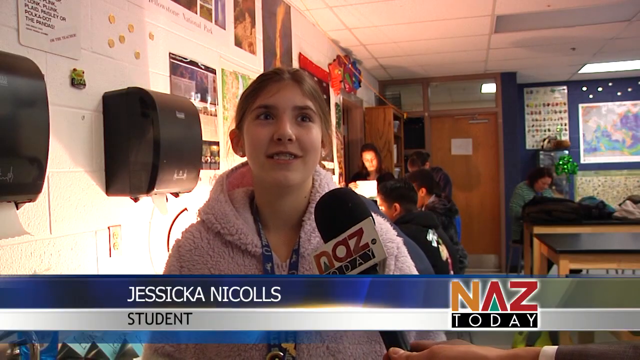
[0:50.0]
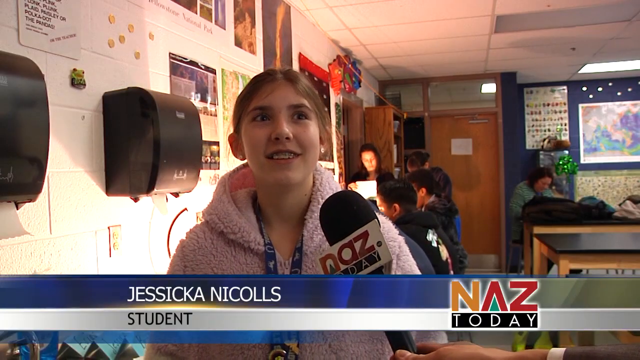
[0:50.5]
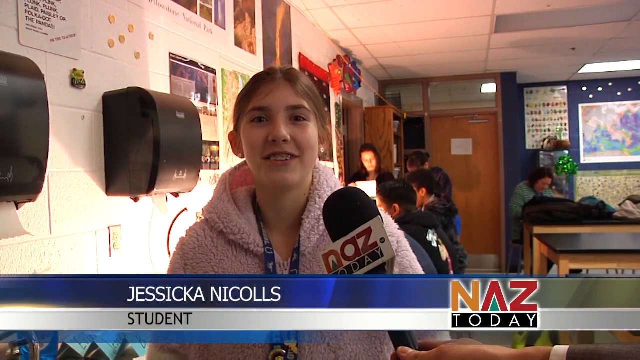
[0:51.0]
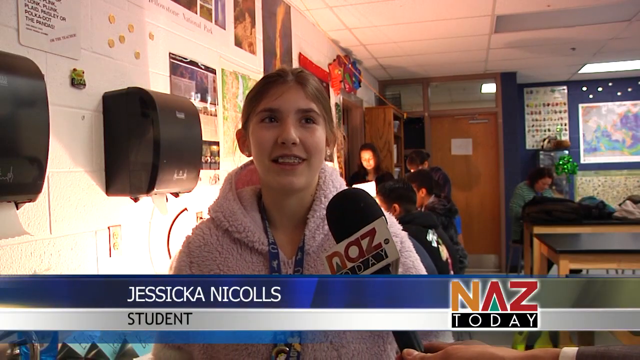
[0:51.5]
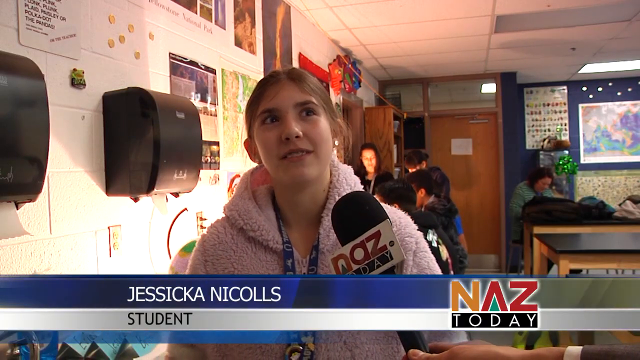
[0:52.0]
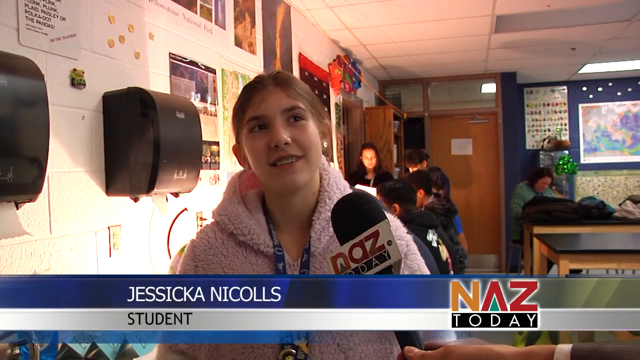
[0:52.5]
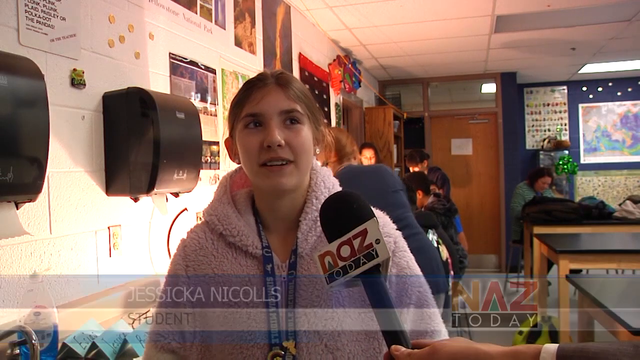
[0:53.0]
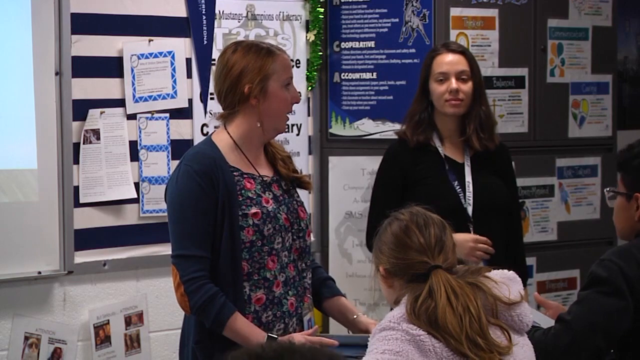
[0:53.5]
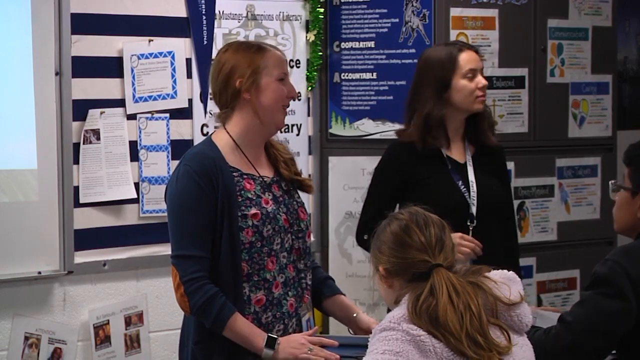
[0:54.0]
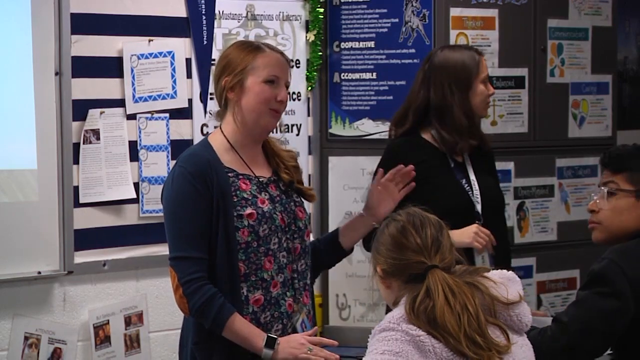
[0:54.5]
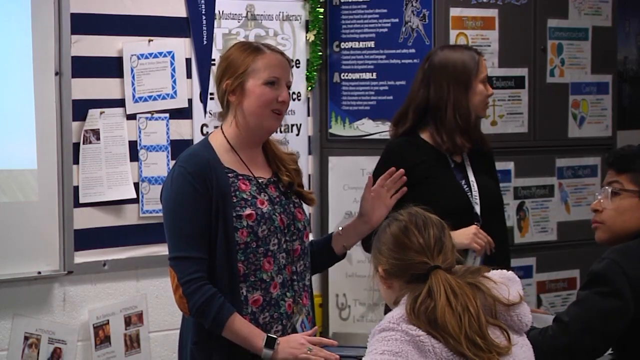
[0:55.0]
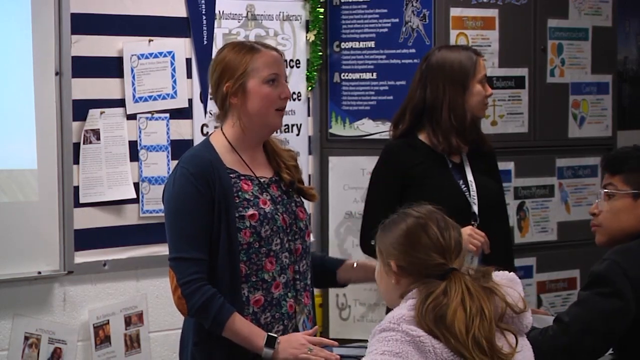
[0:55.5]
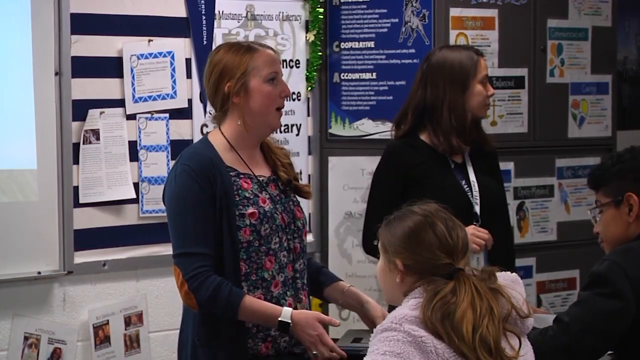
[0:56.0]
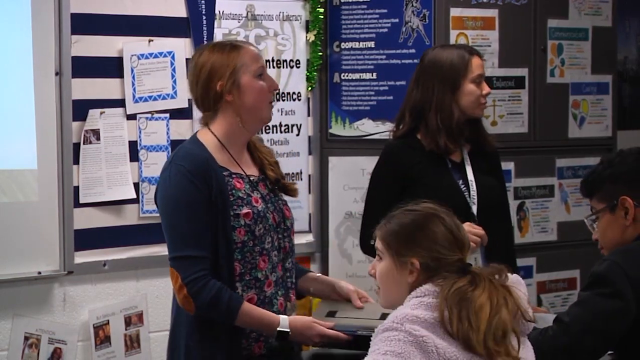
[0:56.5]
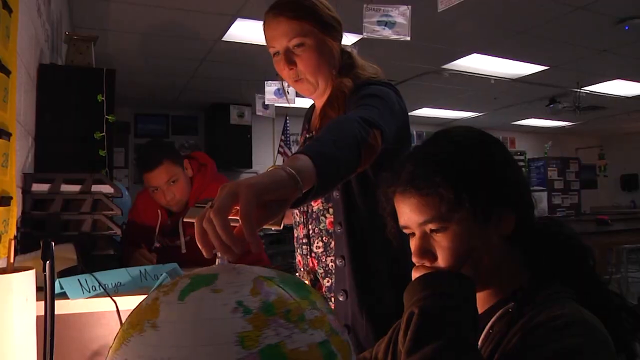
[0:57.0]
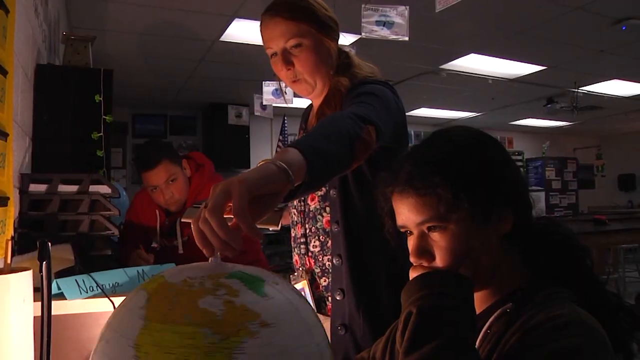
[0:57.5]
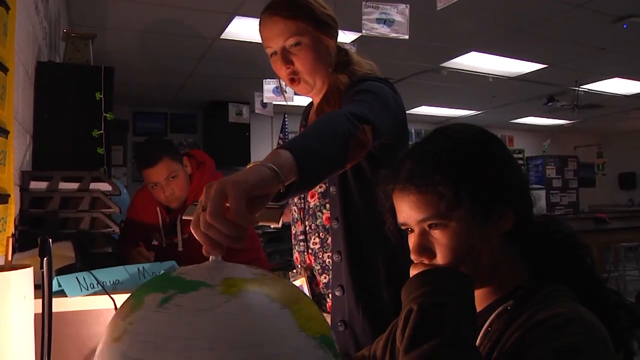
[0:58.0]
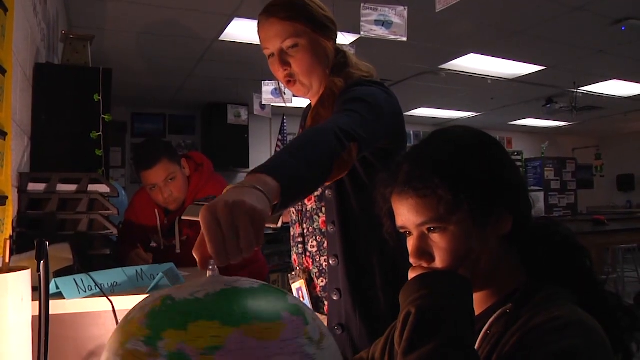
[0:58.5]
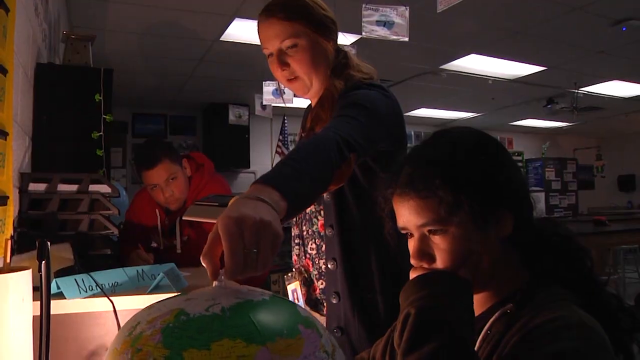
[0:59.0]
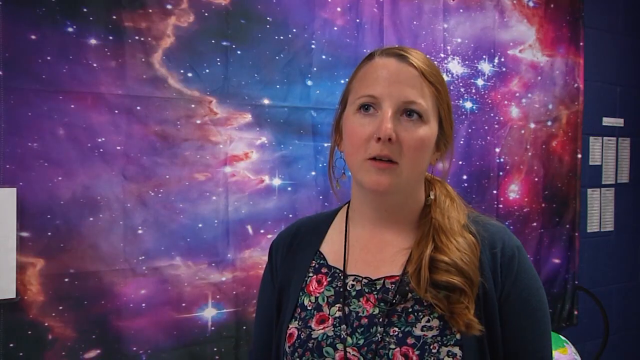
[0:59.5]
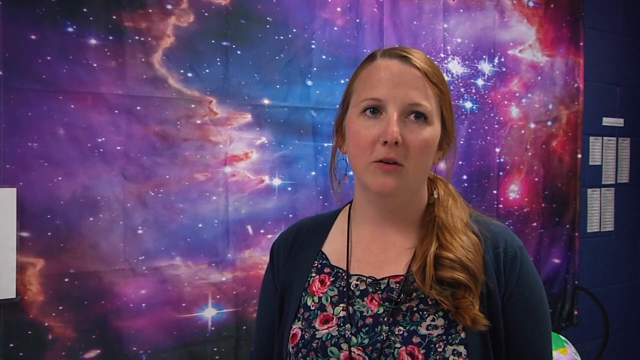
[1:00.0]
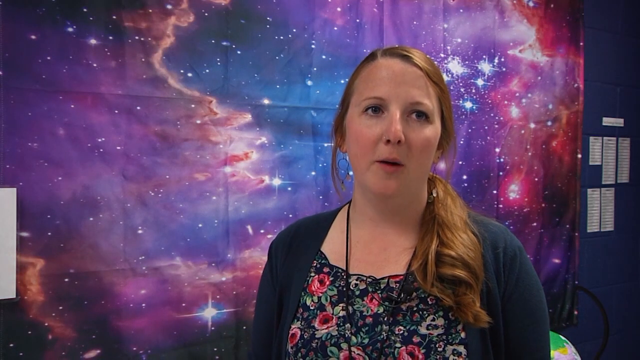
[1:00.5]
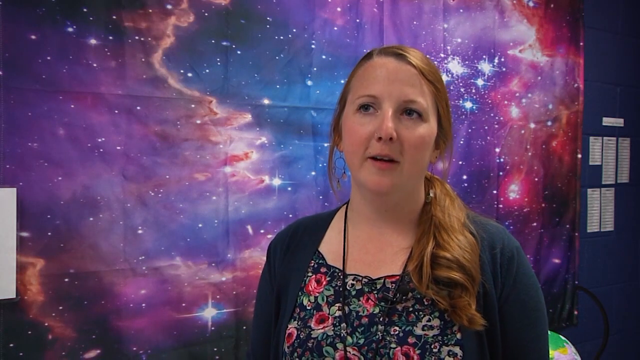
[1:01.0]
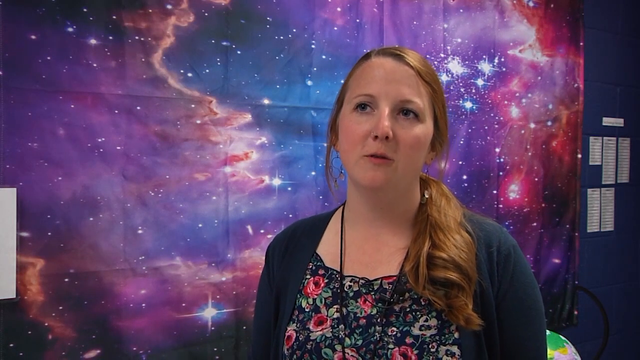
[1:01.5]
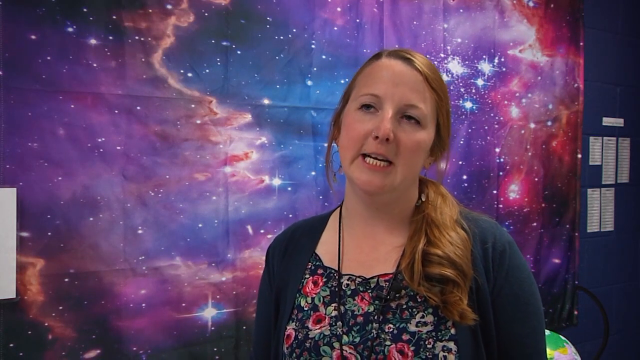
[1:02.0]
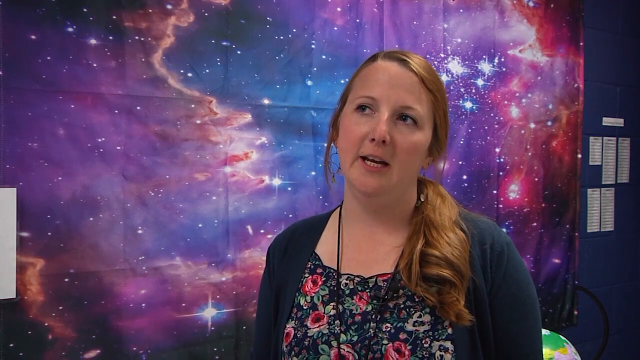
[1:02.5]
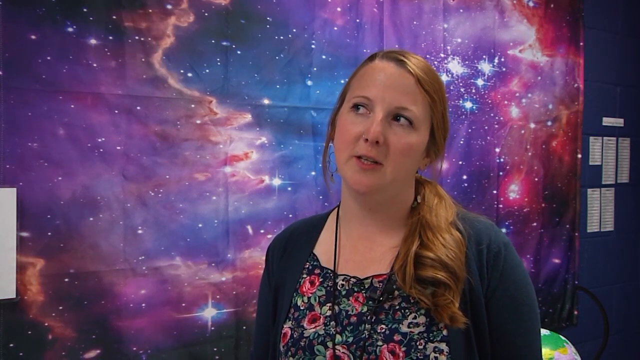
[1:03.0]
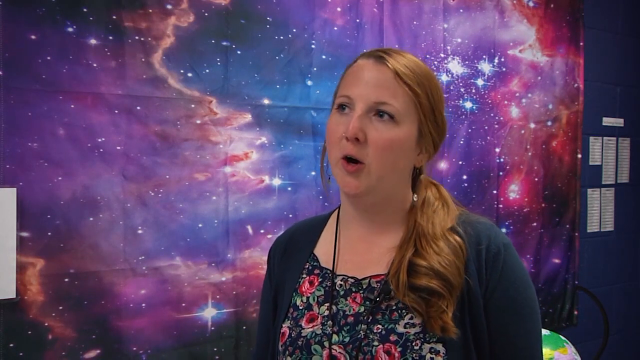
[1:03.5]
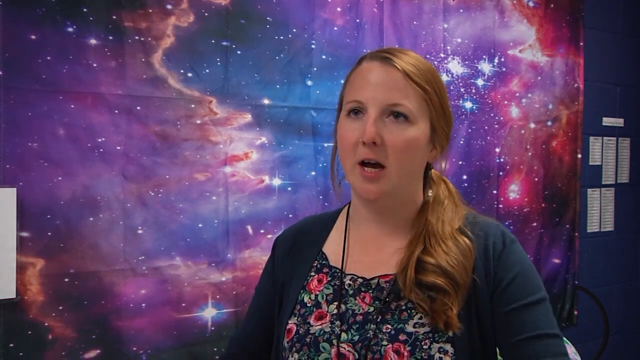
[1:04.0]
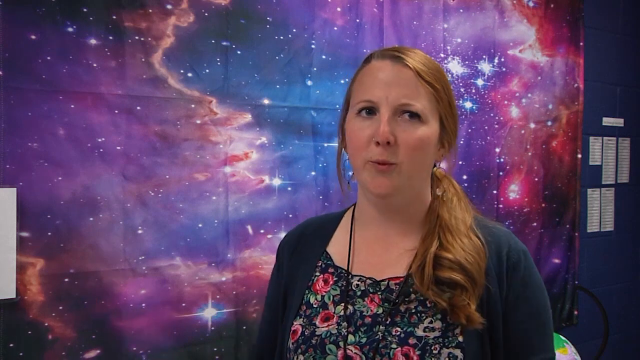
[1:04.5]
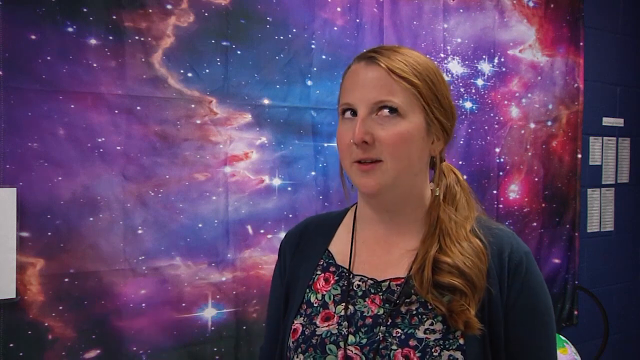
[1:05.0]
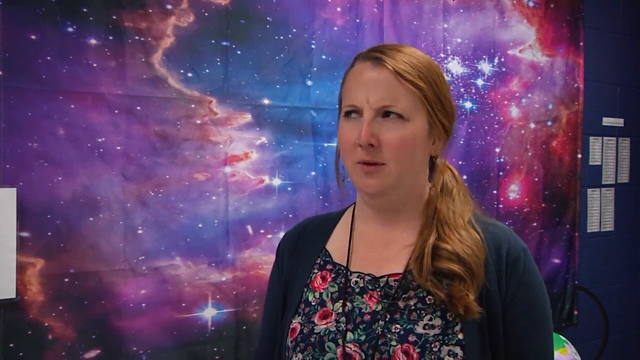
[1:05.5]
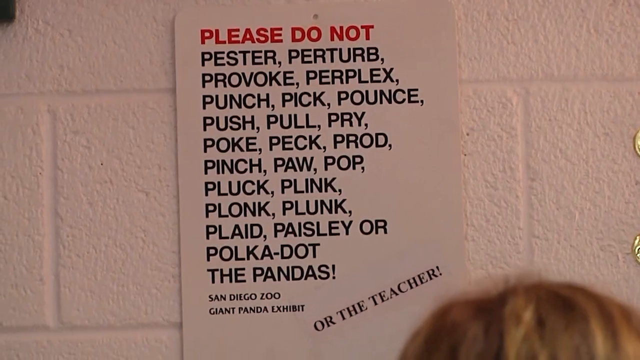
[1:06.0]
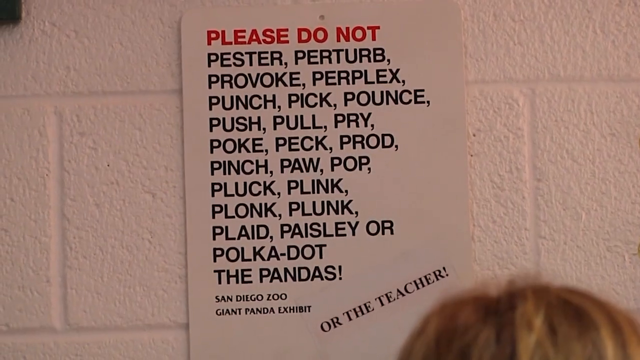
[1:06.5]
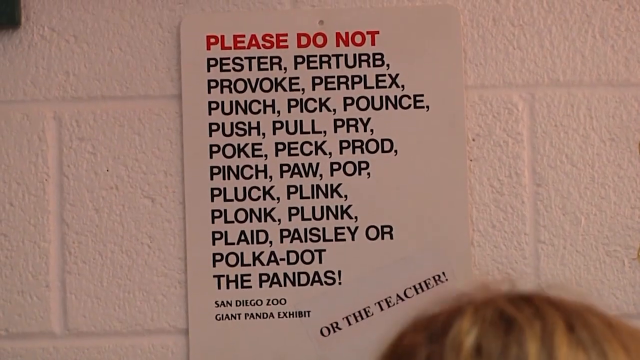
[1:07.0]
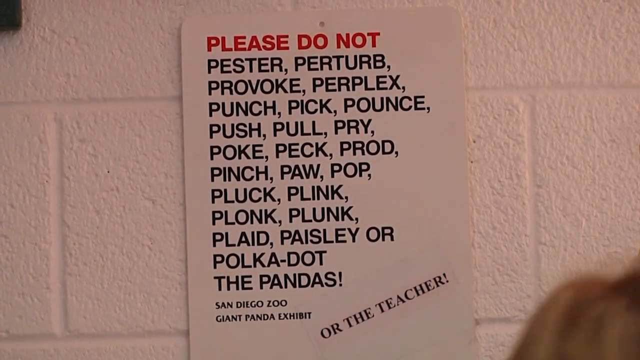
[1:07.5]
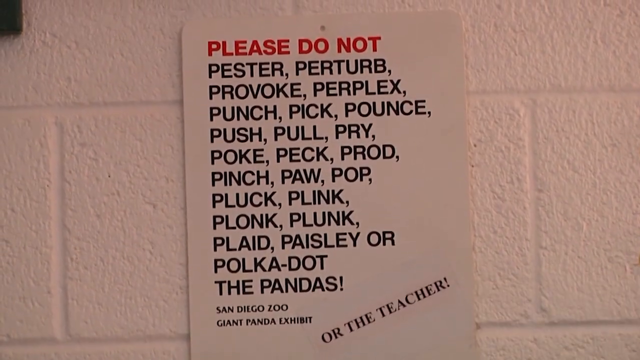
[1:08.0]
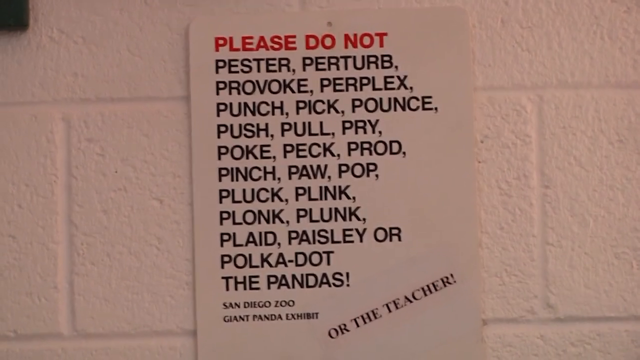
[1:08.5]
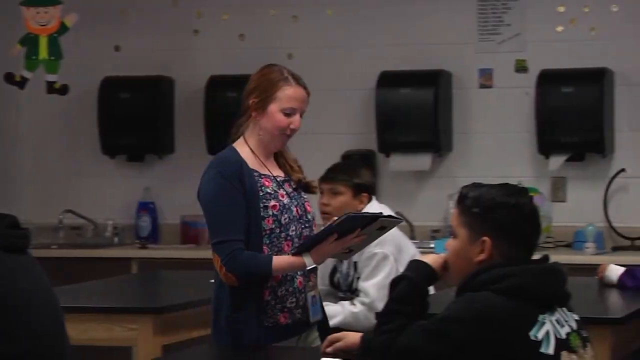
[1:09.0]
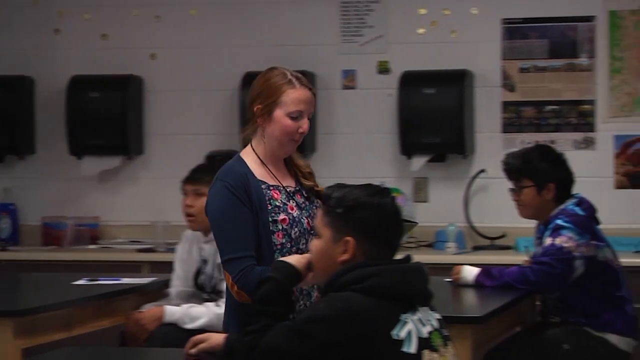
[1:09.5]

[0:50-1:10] A Caucasian student with brown hair wearing a pink sweater is interviewed in a classroom. A caption at the bottom of the screen shows her name, spelled J-E-S-S-I-C-K-A N-I-C-O-L-L-S, and the interview is by Naz Today and AZ Today. She talks as students move behind her. The scene shifts to a Caucasian woman with red hair standing next to a Caucasian woman with black hair as they address students. The red-haired woman then picks up a tablet inside a foam cover. Next, three students are shown as the red-haired woman spins a globe, while two Caucasian students, a male in a red hoodie and a female with black hair, watch the globe attentively. The scene shifts back to the woman talking with a poster of the universe with twinkling stars behind her; she spreads her hands as she talks. Then a poster above a white wall is shown: its background is white, with the words "please do not" in red, and underneath a number of words in black such as "pester", "perturb", "provoke" and "perplex", among others.